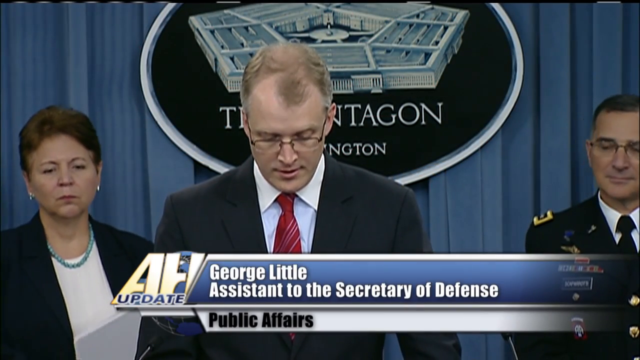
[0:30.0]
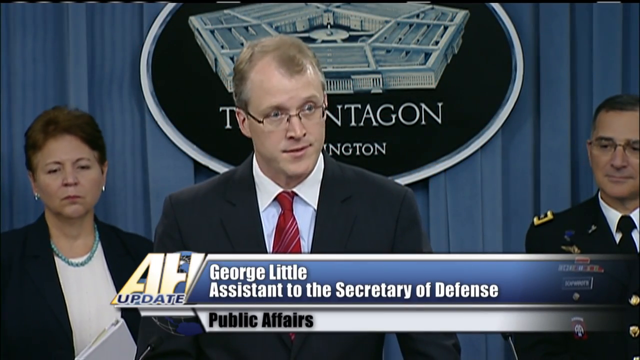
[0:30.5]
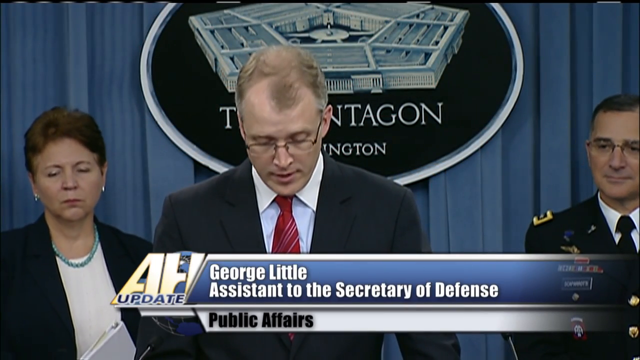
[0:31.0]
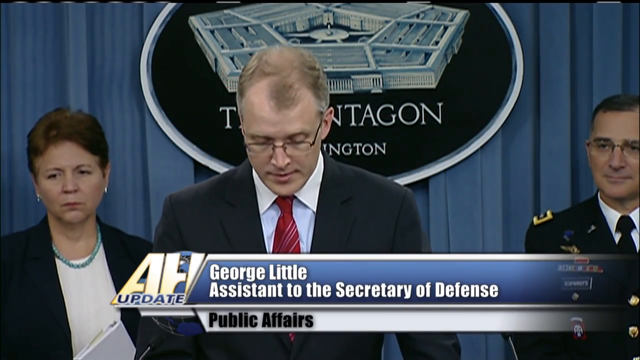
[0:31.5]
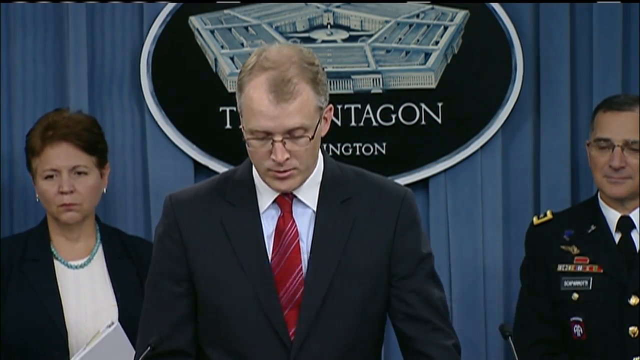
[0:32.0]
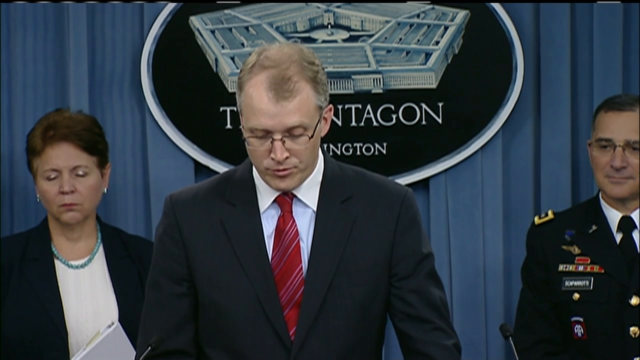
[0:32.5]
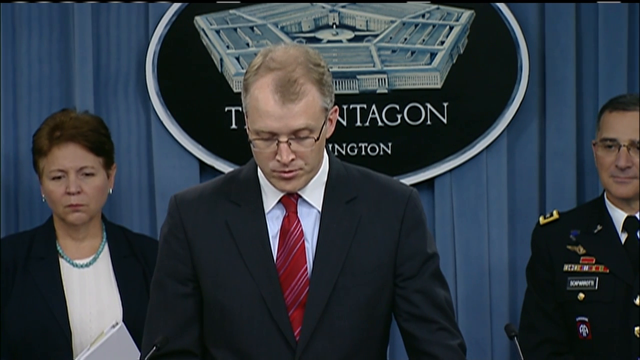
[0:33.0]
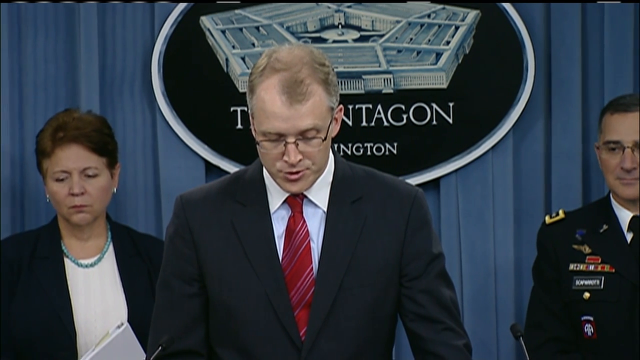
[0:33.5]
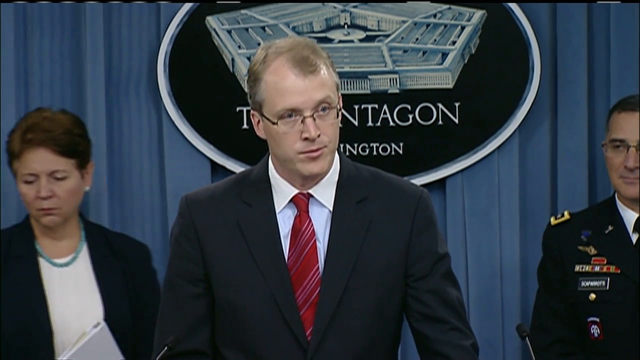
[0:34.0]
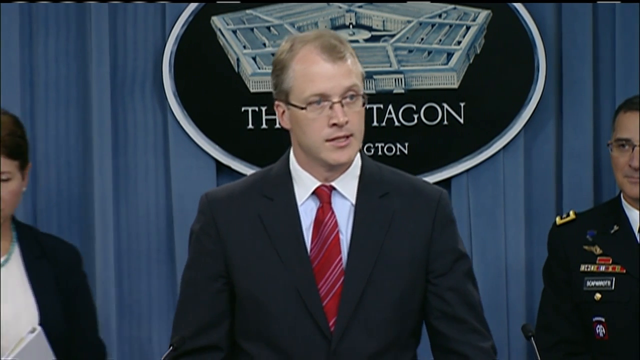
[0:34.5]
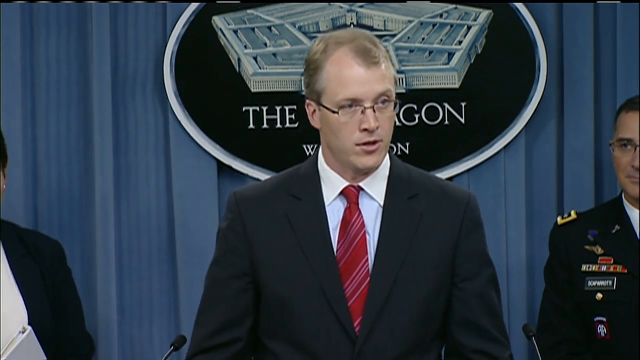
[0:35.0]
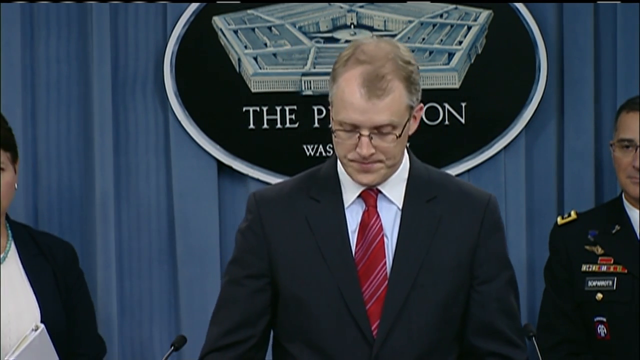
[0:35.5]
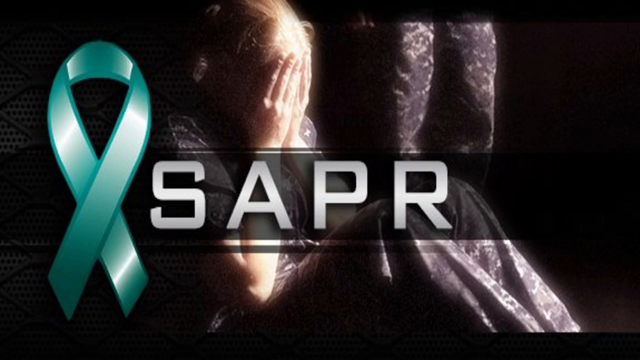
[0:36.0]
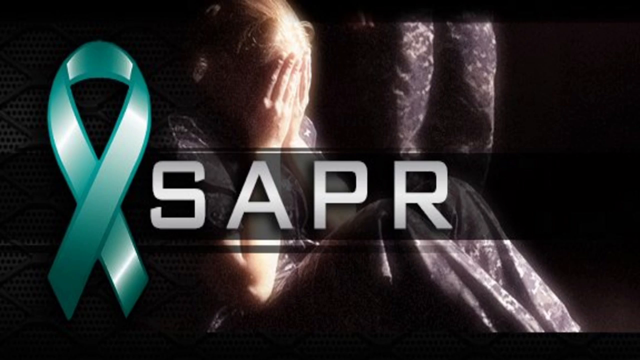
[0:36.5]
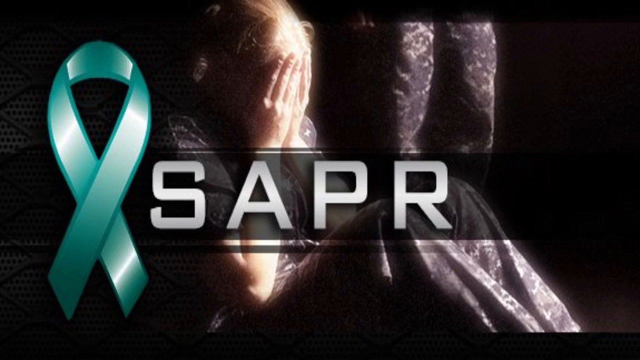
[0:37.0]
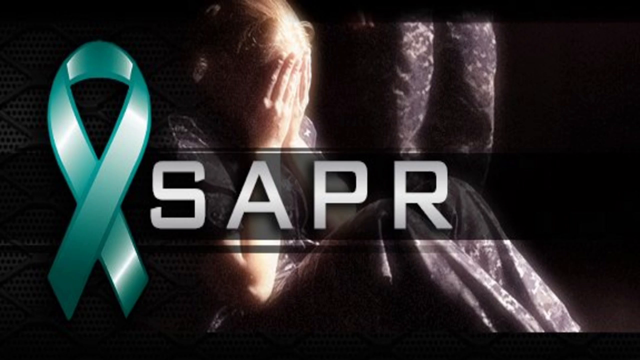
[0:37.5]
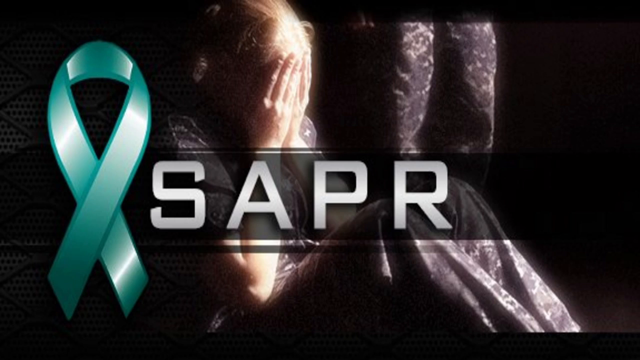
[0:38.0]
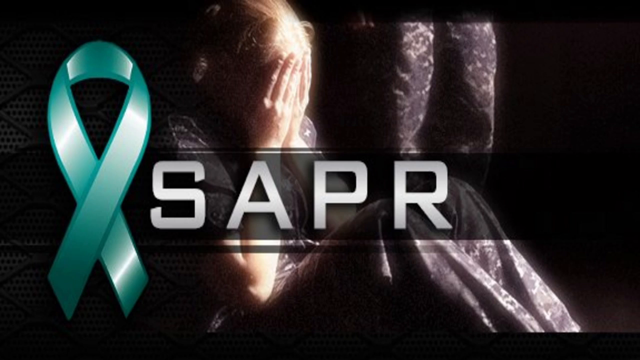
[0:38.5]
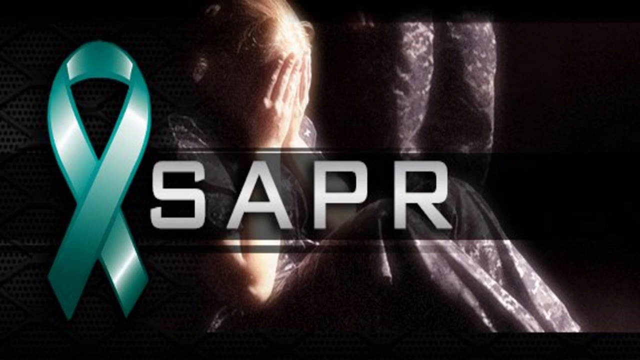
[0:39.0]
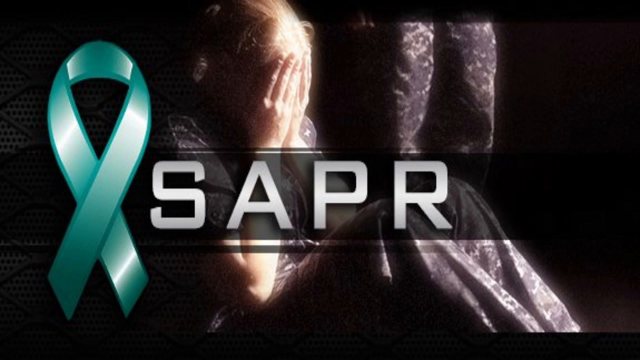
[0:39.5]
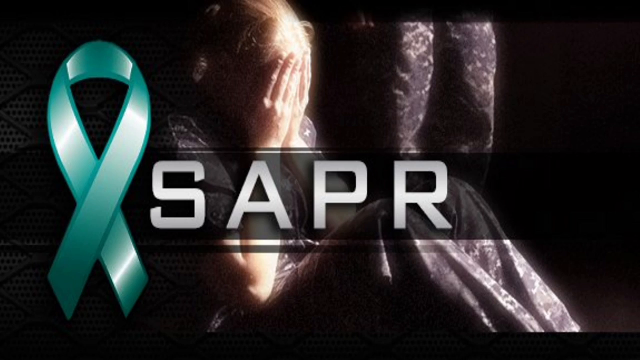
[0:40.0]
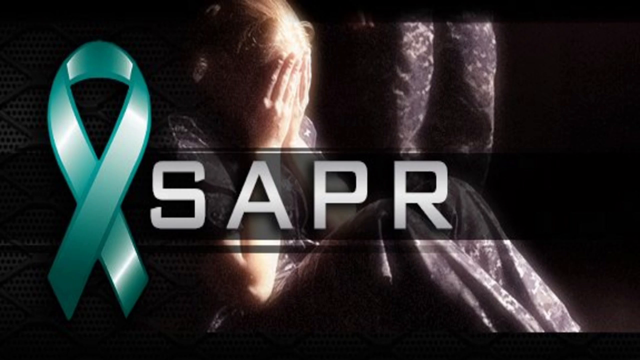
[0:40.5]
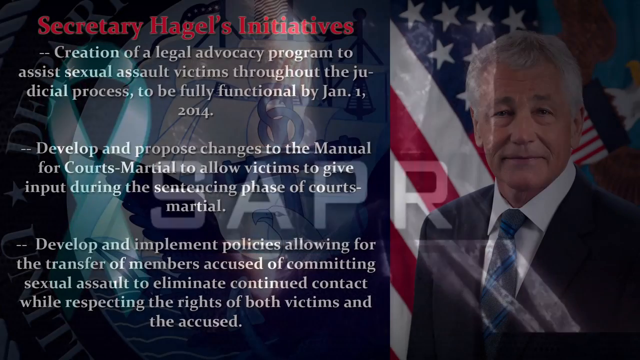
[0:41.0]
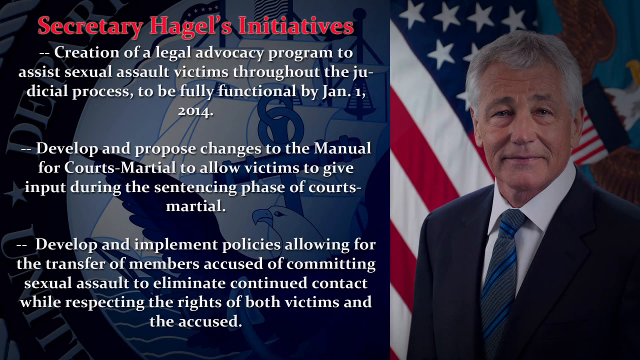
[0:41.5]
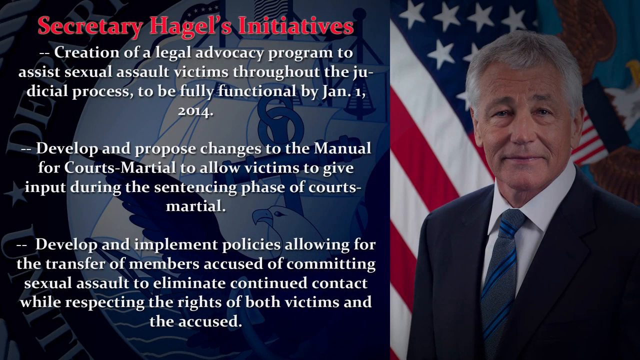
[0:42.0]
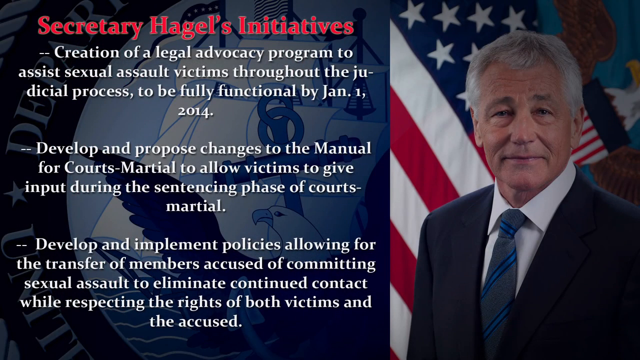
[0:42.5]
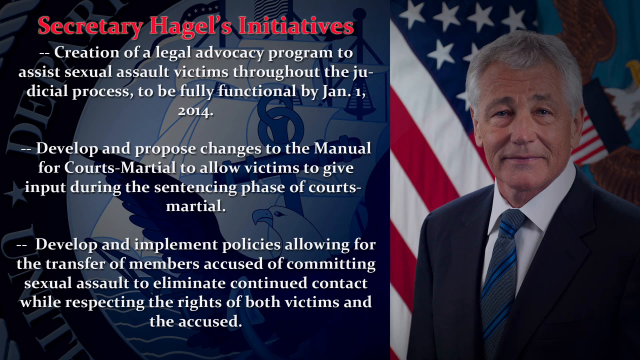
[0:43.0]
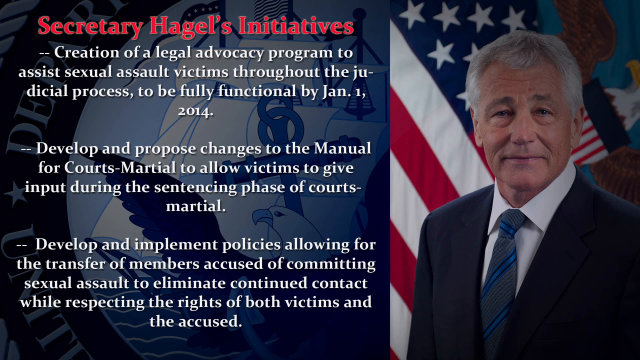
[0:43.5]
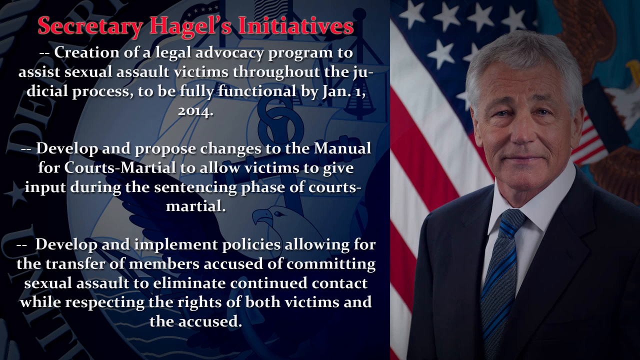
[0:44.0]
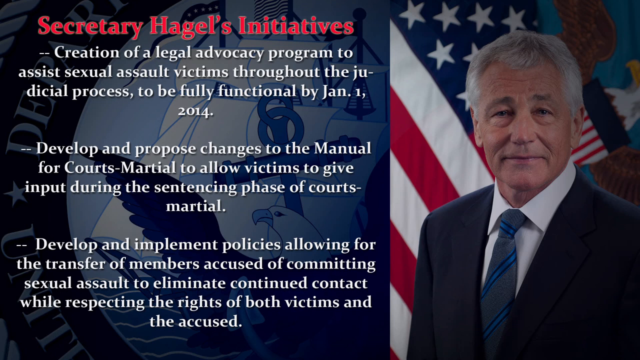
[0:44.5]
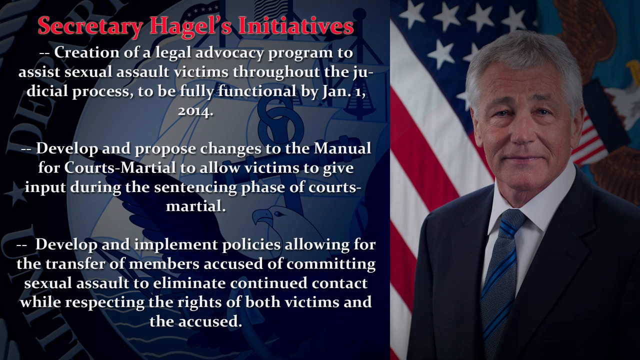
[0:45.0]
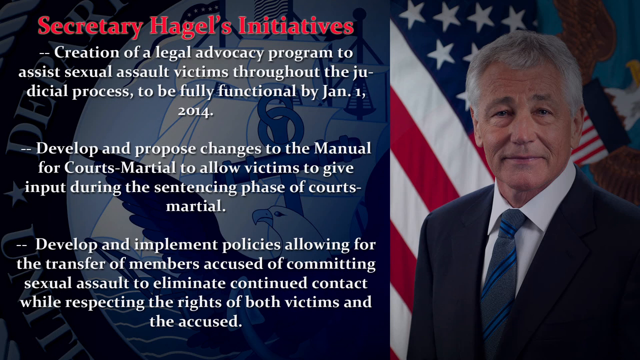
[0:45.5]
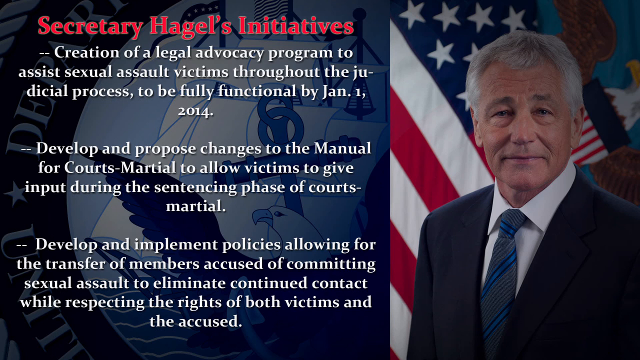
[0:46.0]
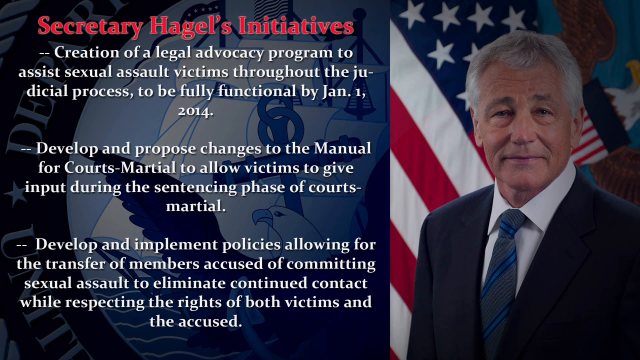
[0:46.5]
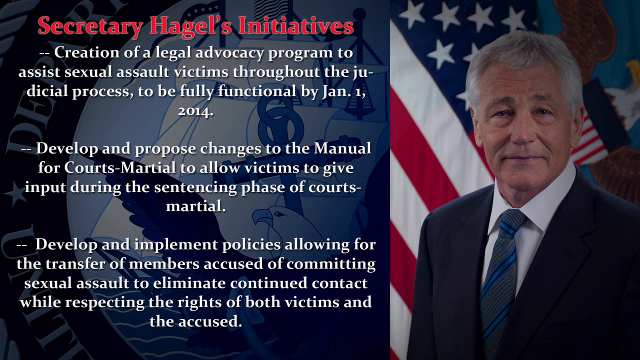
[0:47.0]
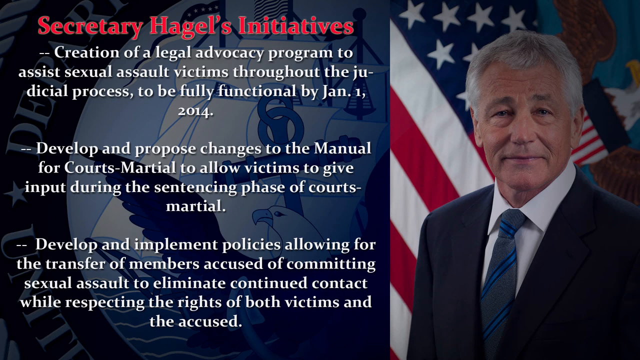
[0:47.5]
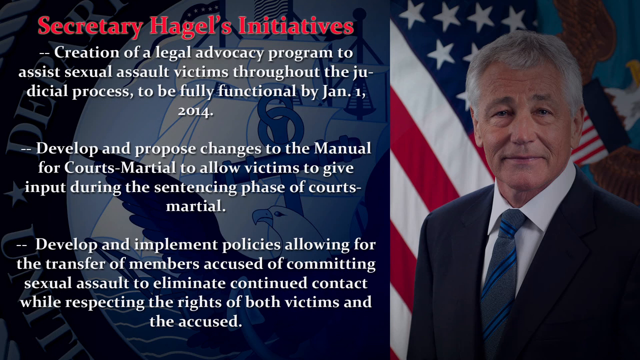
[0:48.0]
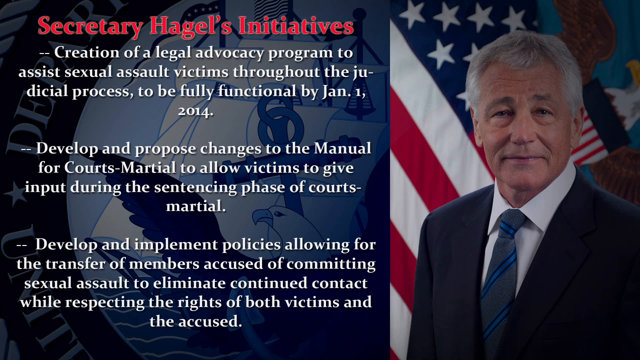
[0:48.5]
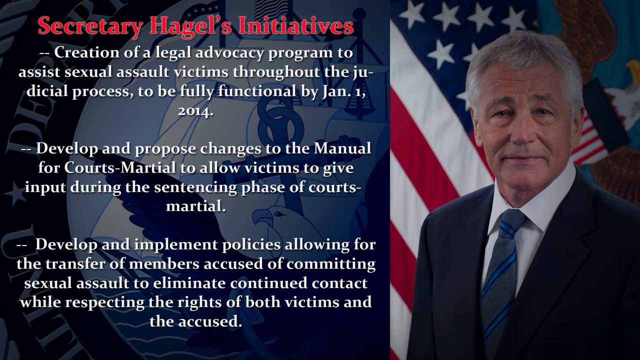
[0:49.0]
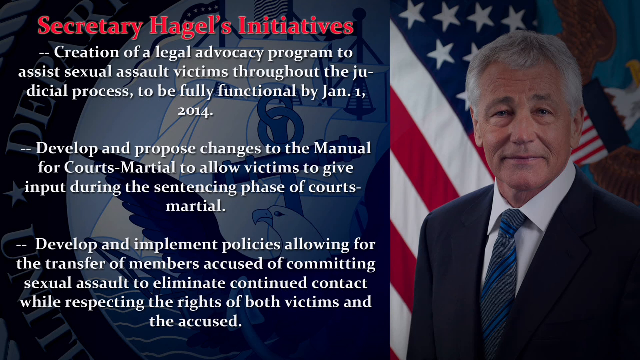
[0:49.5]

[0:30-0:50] George Little, Assistant to the Secretary of Defense of Public Affairs, is at the center, and "AF update" is visible. Behind him is a sign of the Pentagon in Washington. On the left, a woman wears a suit with a white t-shirt; on the right, a man wears a military uniform and a black tie. The man speaking wears a suit with a red tie. He continues speaking, and then text reading "ASAPR" appears. Behind that text is a woman blocking her face with both hands; she wears some kind of purple fabric. A ribbon is on the left. Next comes text titled "Secretary Hagel's initiatives": creation of a legal advocacy program to assist sexual assault victims throughout the judicial process, to be fully functional by January 1st, 2014.